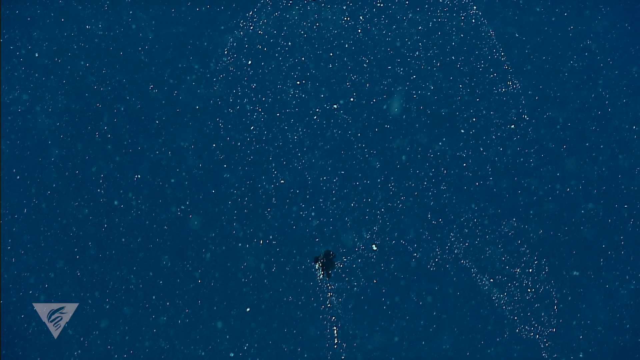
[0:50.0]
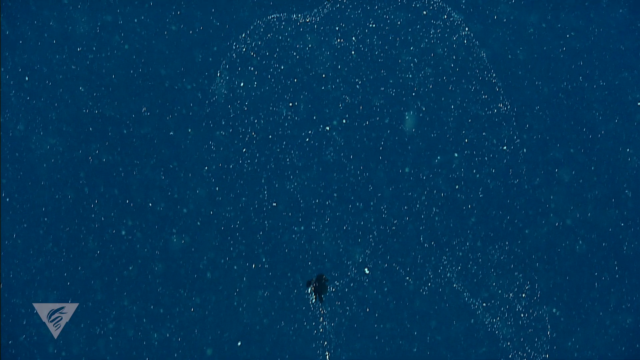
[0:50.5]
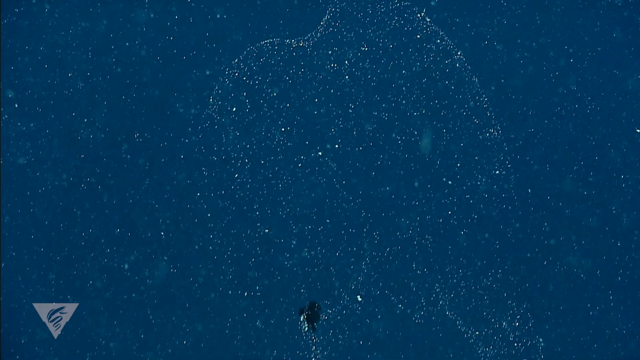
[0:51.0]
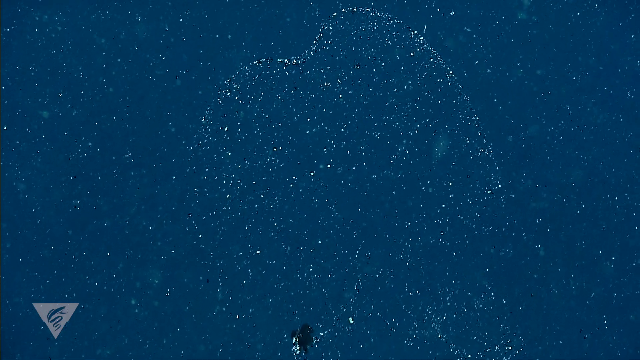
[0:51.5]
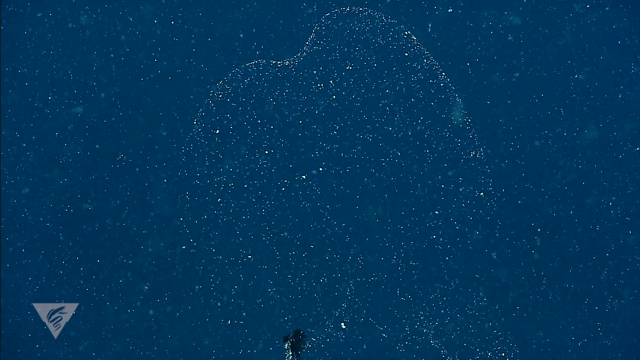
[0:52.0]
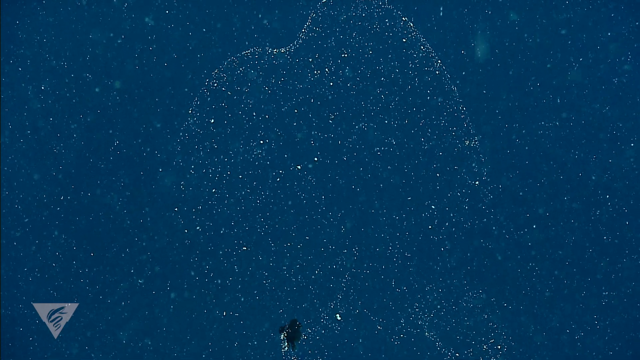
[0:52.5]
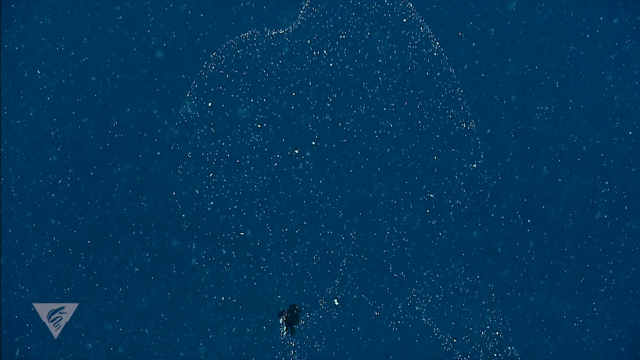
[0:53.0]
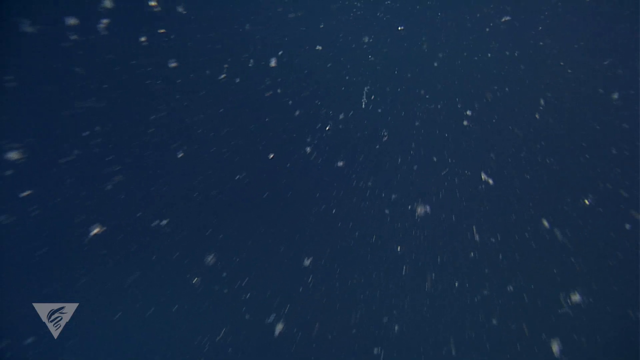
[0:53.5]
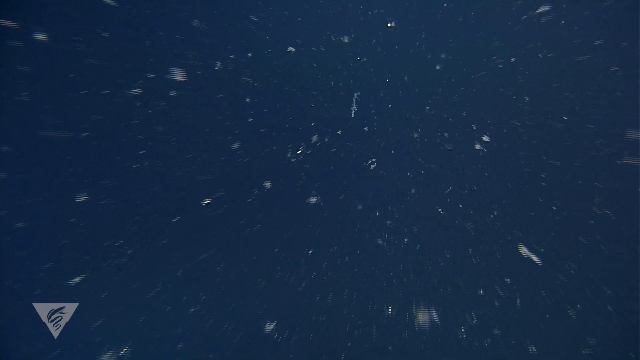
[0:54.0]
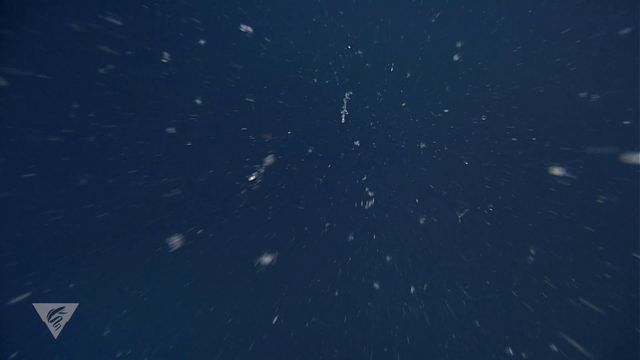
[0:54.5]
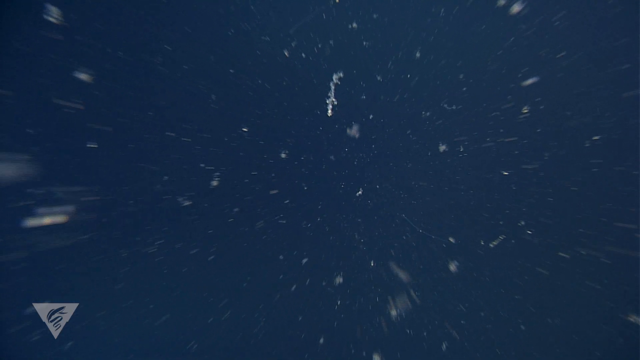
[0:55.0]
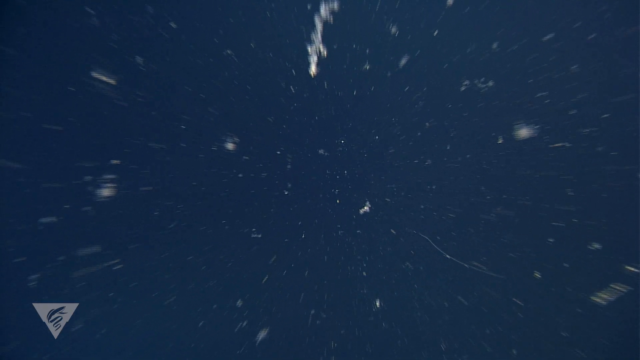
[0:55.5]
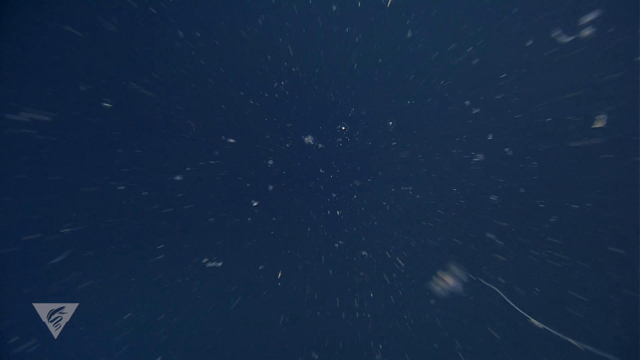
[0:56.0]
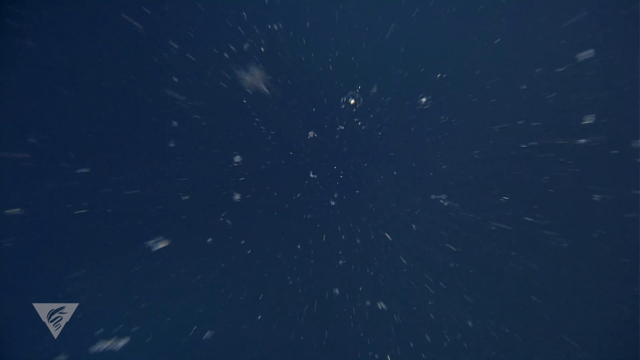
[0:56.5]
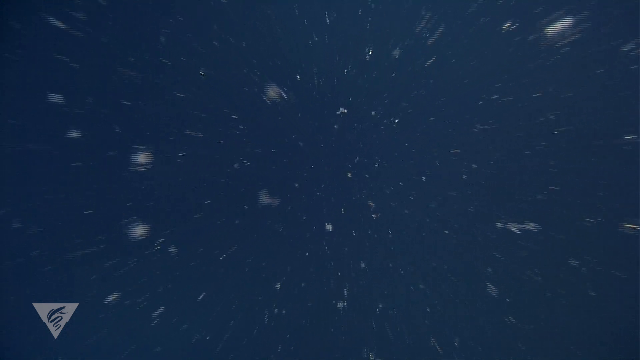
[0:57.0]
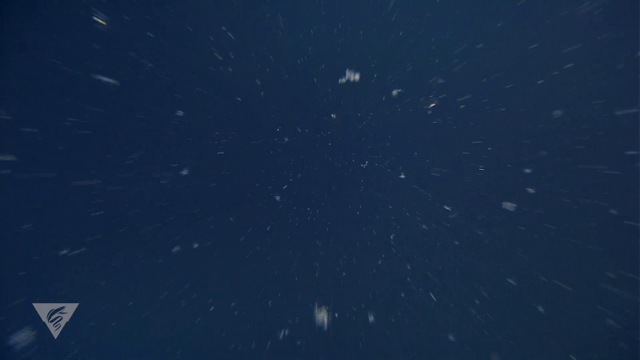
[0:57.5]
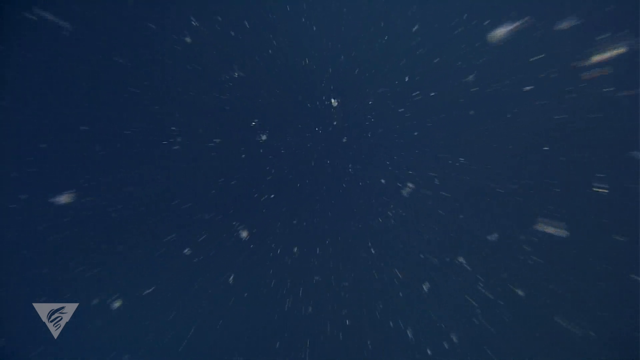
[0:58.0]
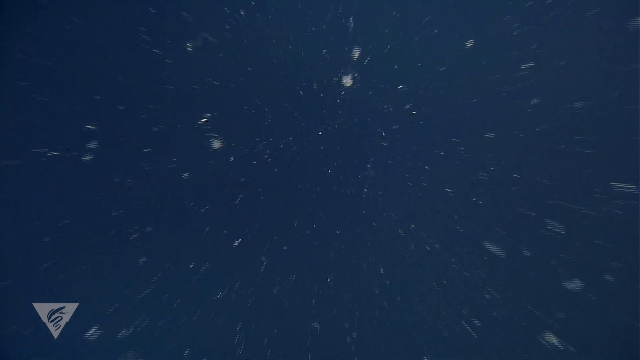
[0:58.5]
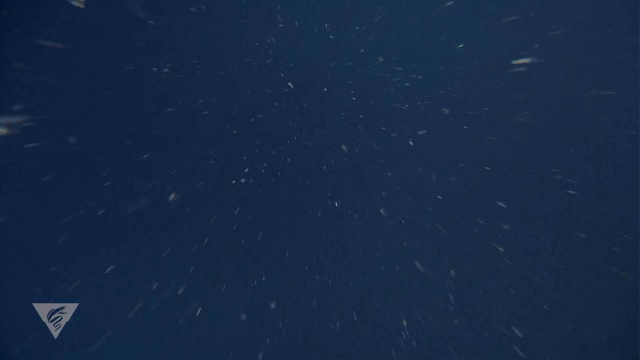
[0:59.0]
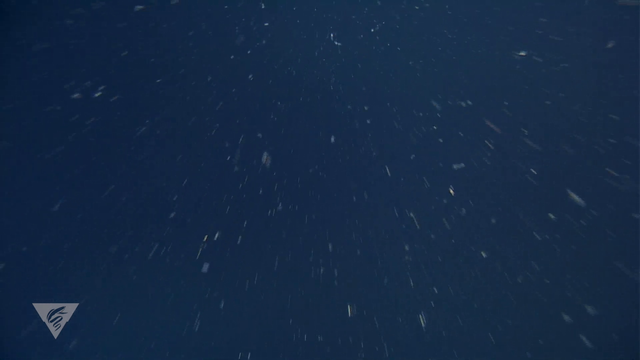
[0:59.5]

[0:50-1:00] A black pteropod in the lower center part of the screen uses its flippers to propel itself through the sea. There is a lot of plankton in the water. The camera, or the person filming, seems to move through the water, passing many tiny creatures that are most likely plankton.